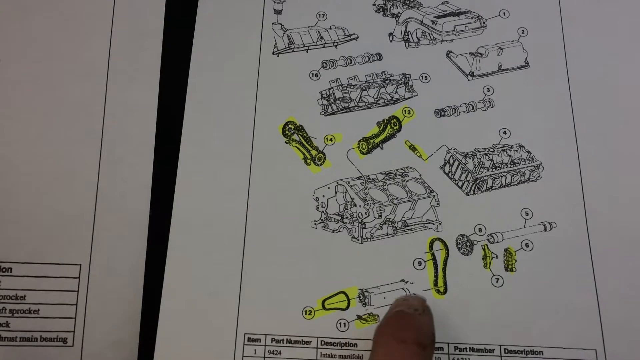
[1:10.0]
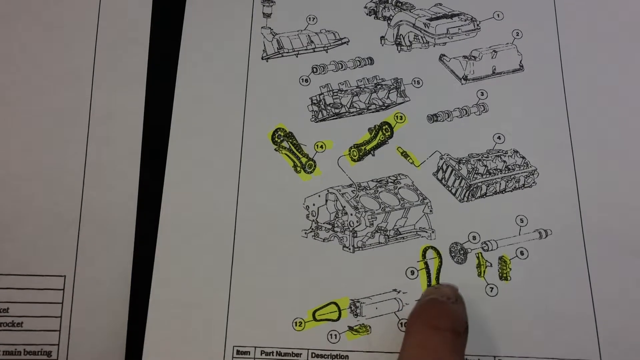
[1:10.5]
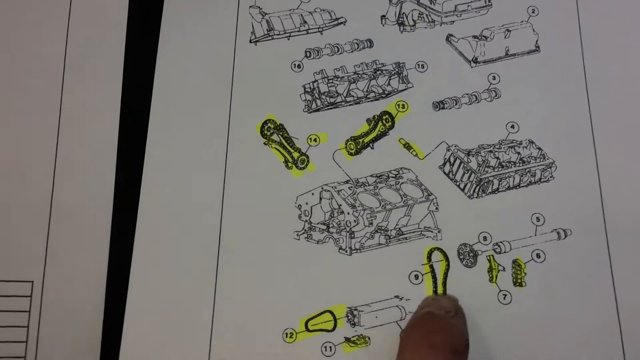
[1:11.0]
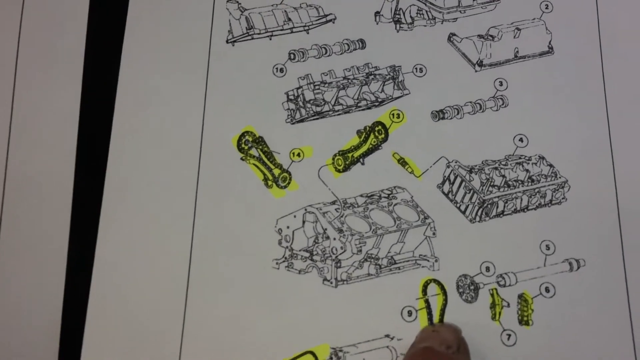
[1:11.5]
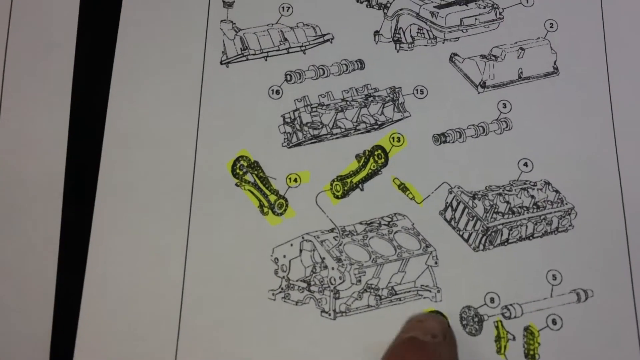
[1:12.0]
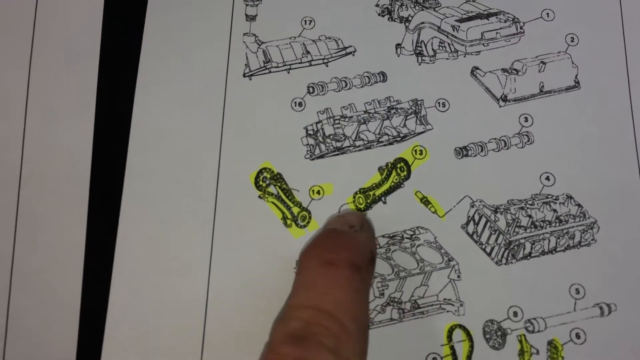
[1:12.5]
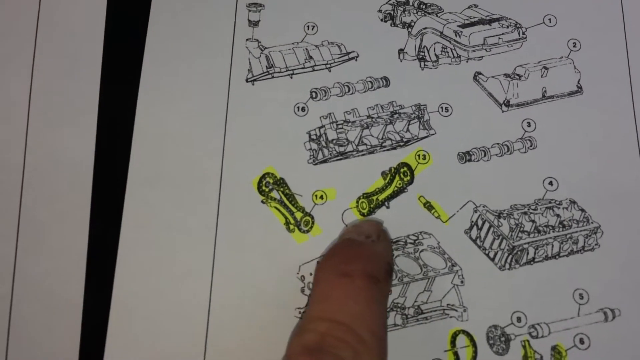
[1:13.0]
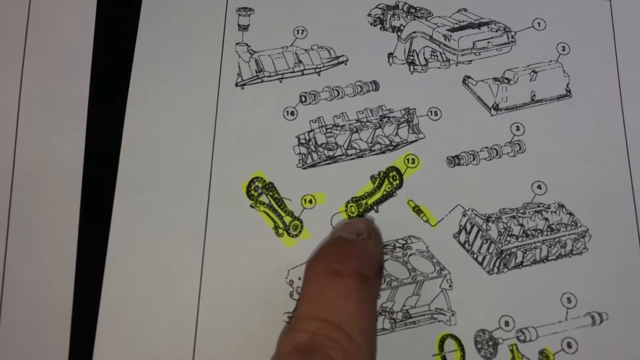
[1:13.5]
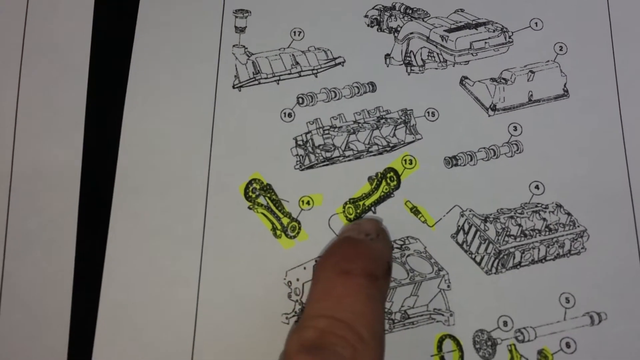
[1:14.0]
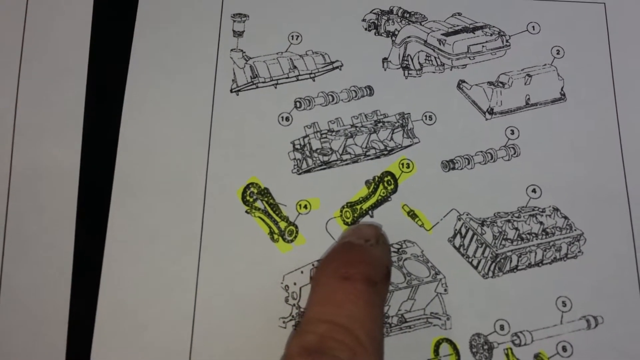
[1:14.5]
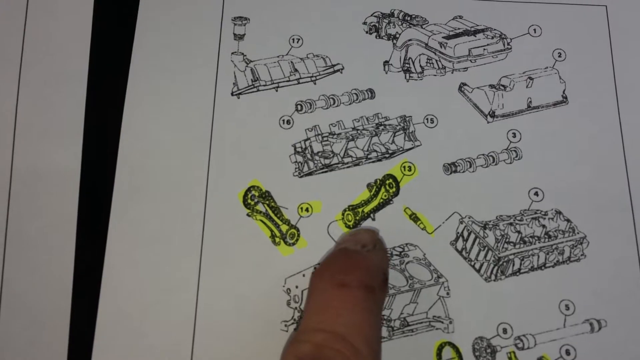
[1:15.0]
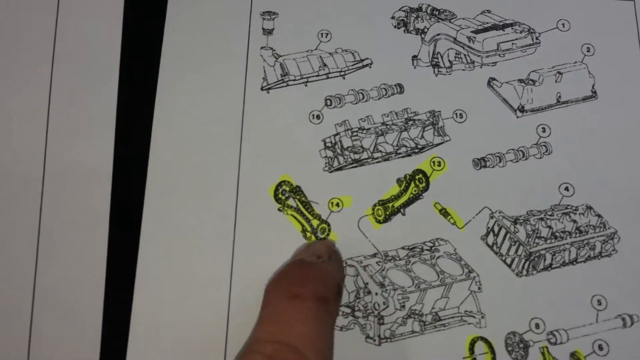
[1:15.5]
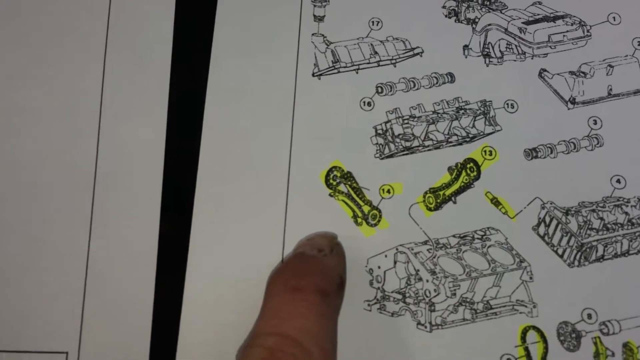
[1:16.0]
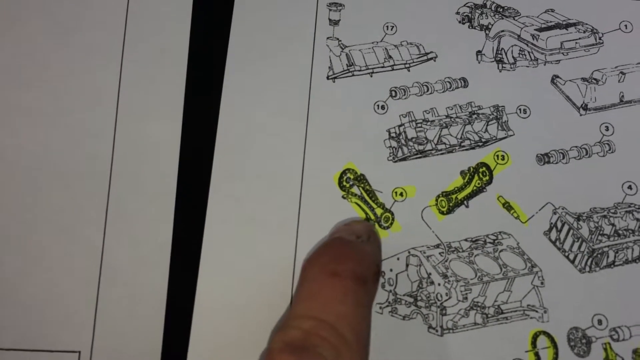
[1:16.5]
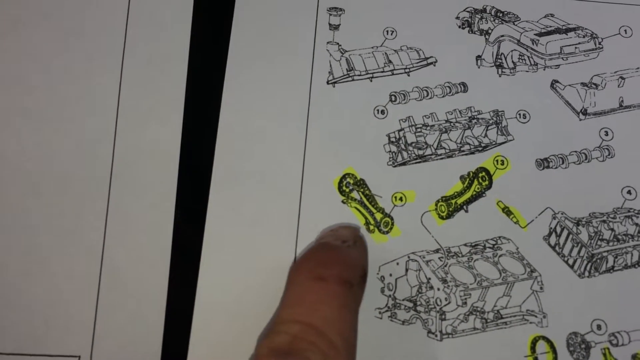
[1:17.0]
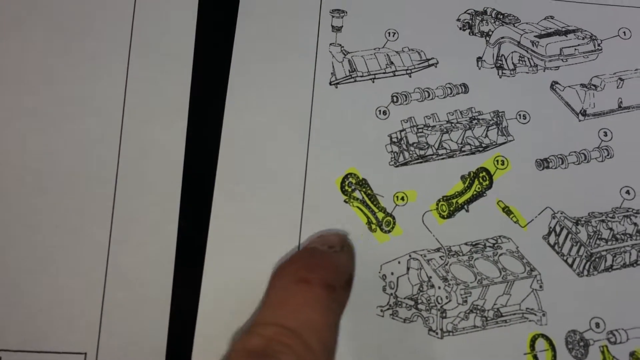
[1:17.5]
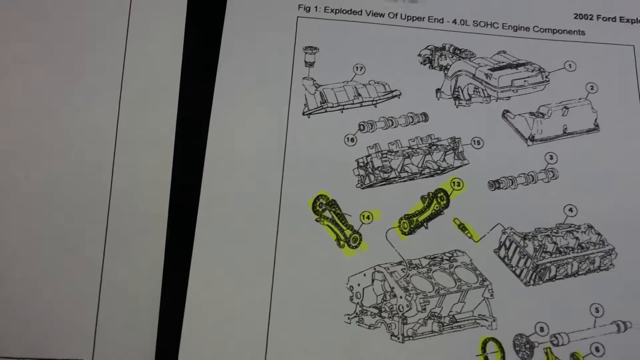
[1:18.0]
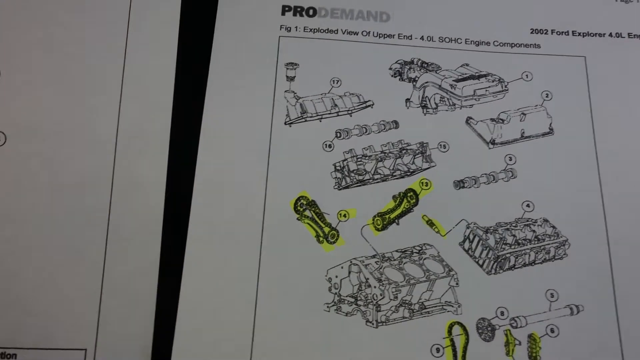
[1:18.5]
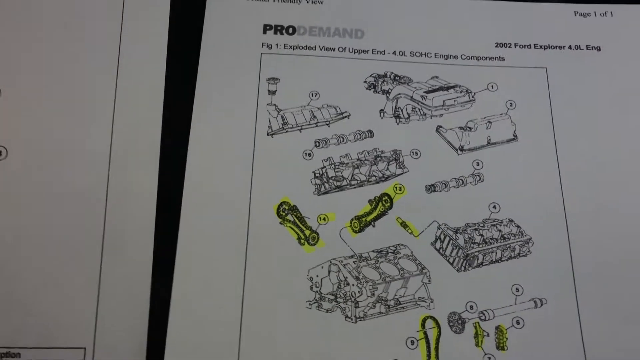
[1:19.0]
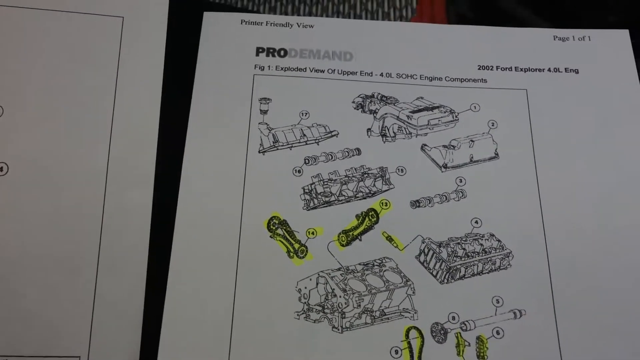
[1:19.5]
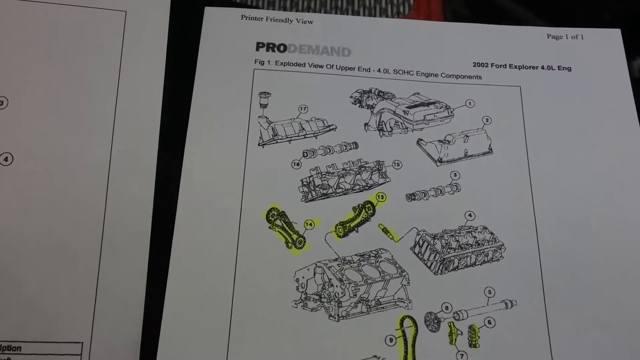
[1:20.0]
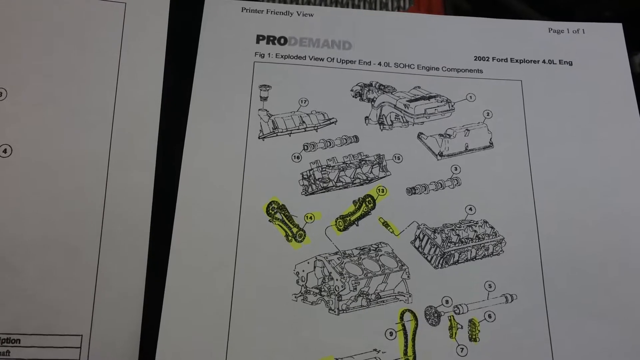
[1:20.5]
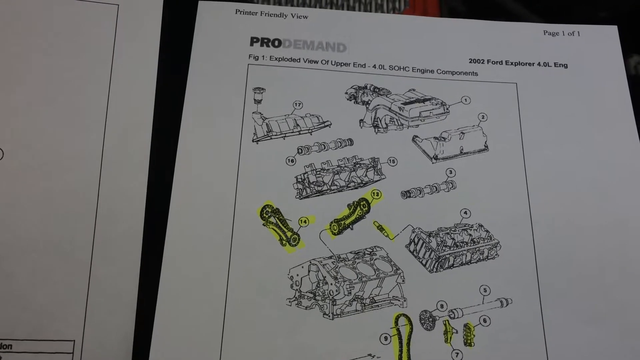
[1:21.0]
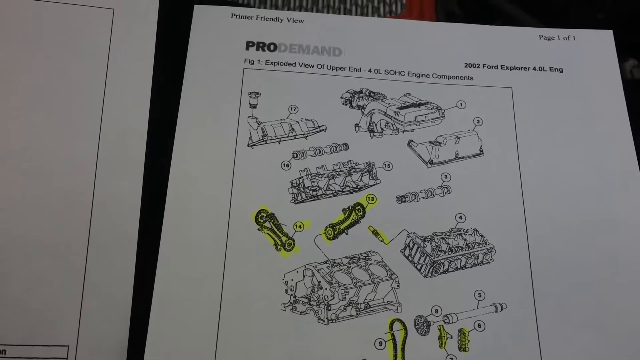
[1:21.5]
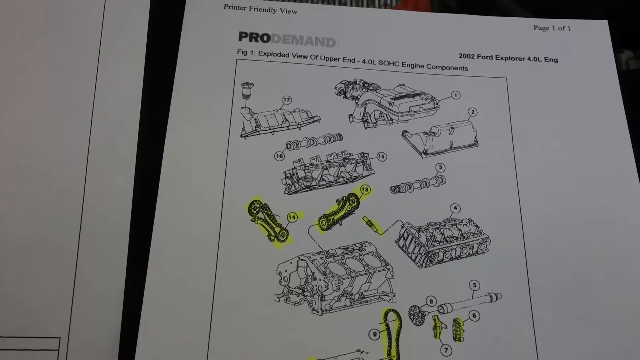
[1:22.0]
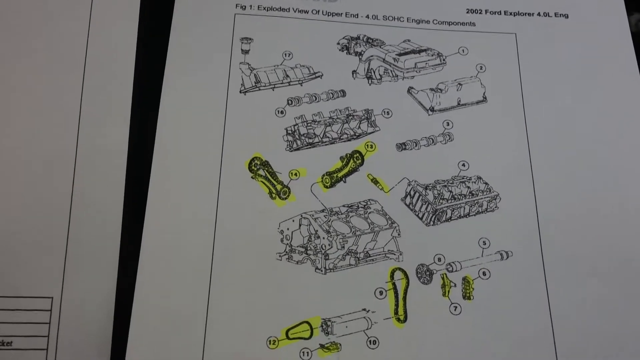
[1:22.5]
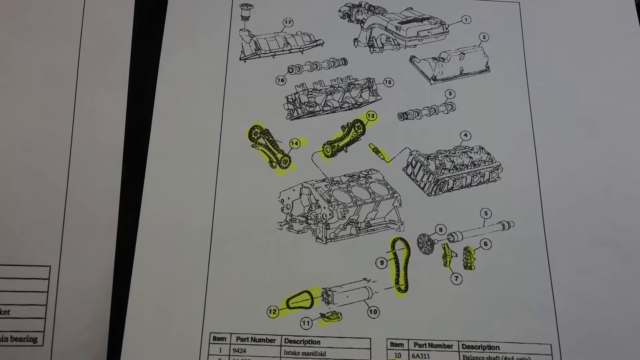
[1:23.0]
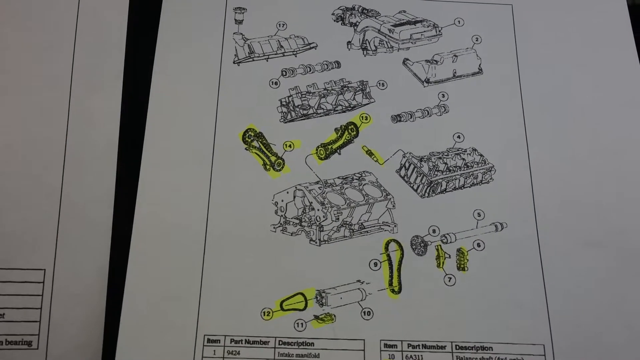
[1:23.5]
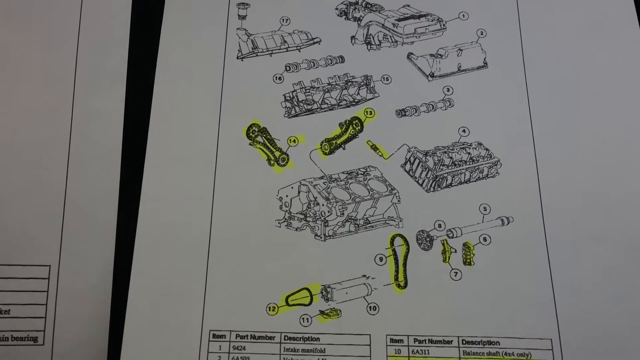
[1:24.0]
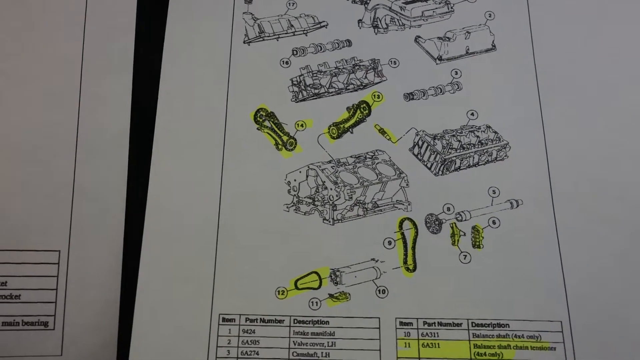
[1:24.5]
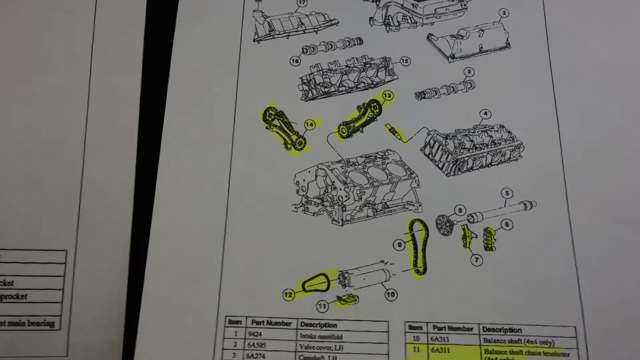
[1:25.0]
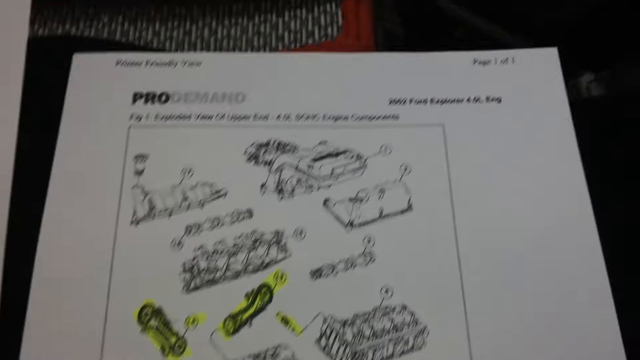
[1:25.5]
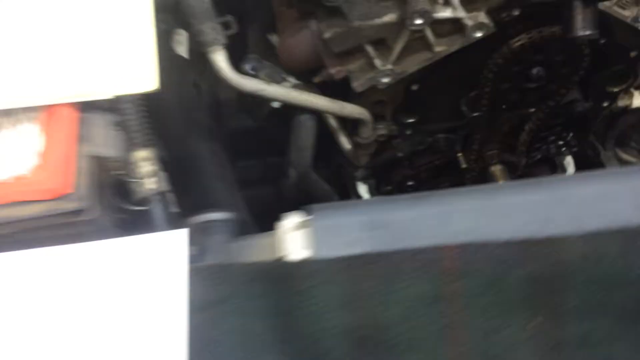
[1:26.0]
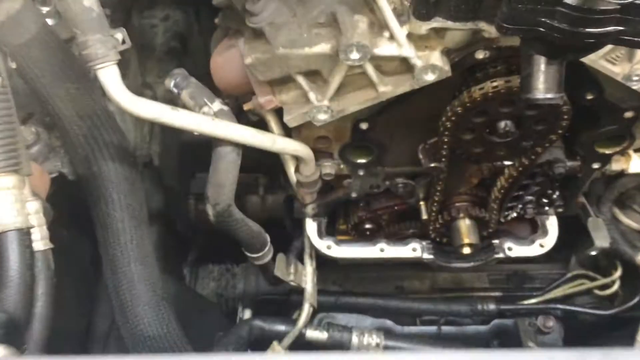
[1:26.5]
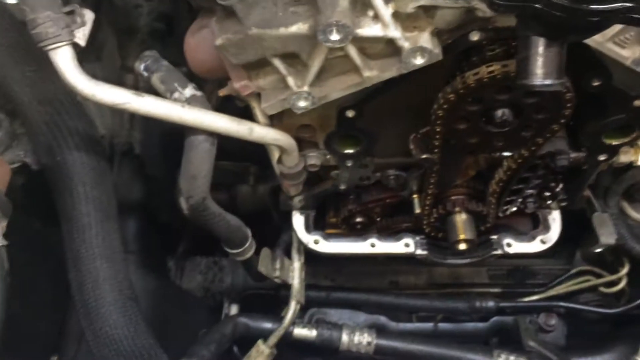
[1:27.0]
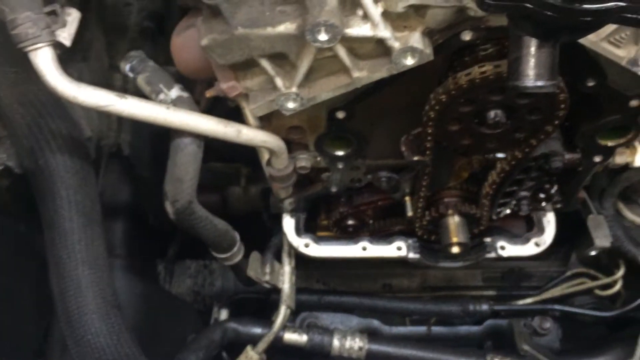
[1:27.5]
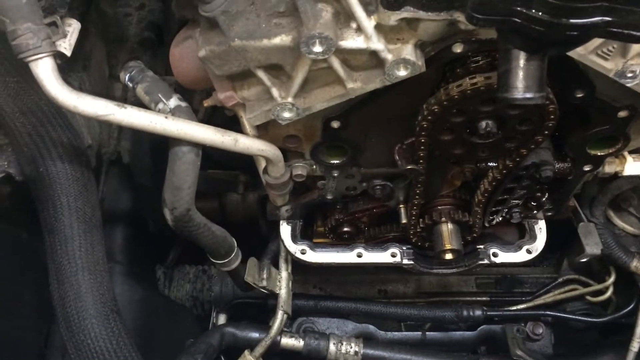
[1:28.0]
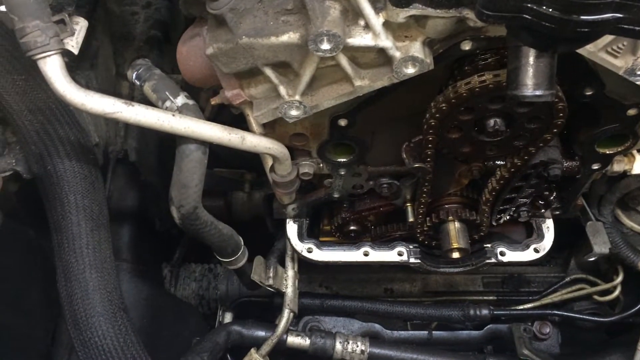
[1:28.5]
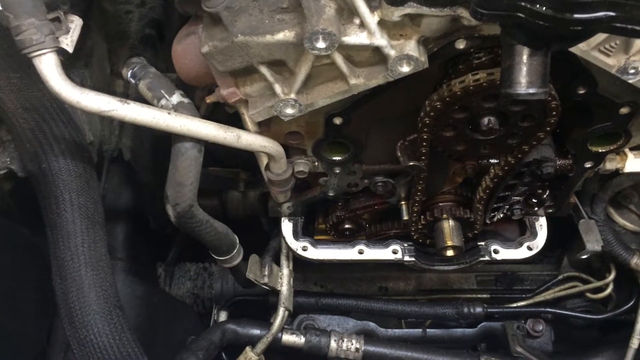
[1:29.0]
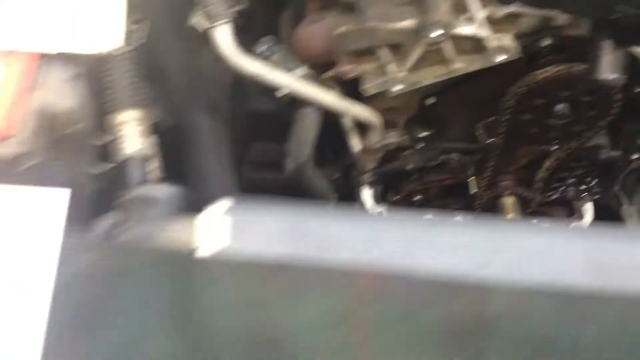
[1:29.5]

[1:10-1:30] The man shows a zoomed-in page of the designs, which seem to be automotive designs, since many of the sketches seem reminiscent of what is under the hood. At the top, in black font, the page reads "2002 Ford Explorer 4.0 liter engine, page 101" and "figure one, exploded view of upper end engine components." The sketch is entirely black and white except for two chains, which are highlighted in neon yellow. All the components are numbered, each with a little line coming off it to a number with a circle around it. He zooms in on the two highlighted chains and points toward them, then moves the camera back to the chains under the hood of the car.